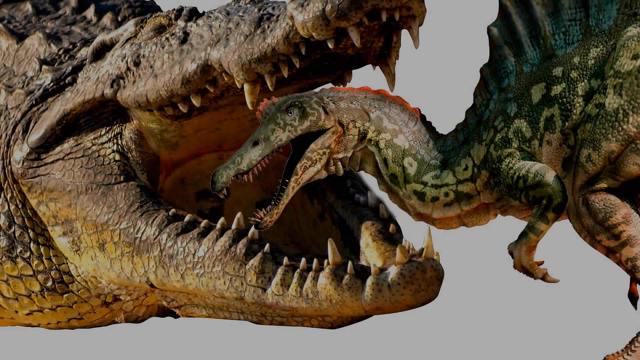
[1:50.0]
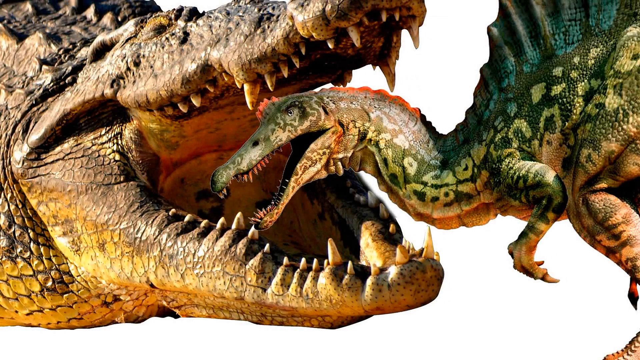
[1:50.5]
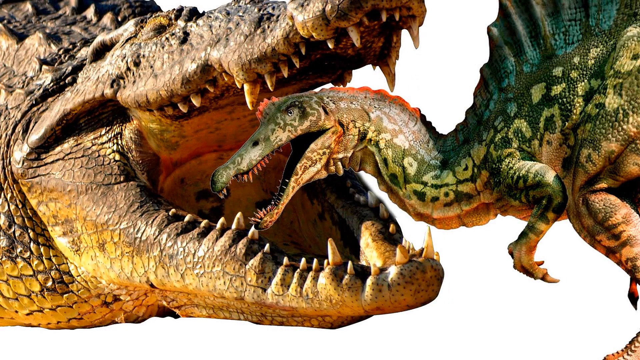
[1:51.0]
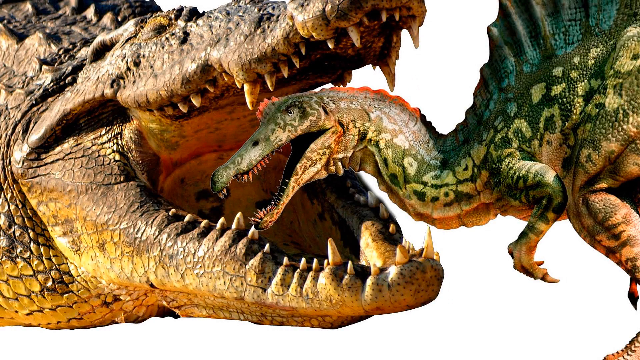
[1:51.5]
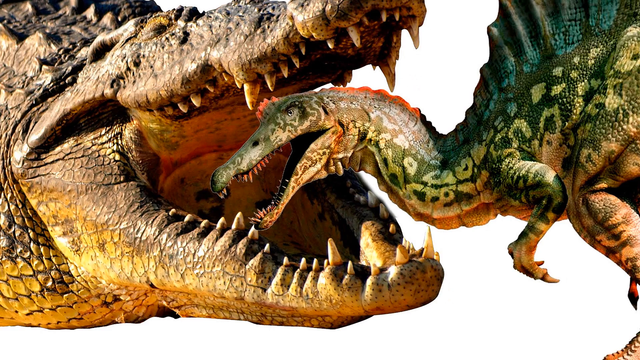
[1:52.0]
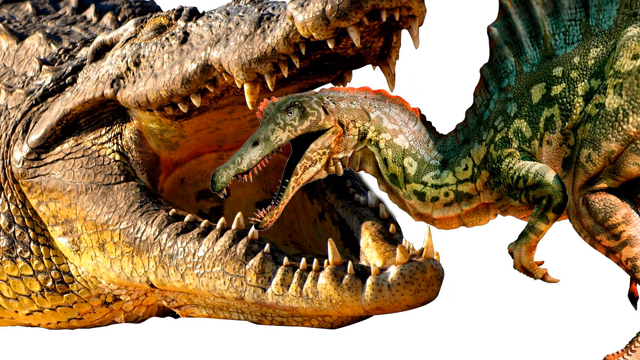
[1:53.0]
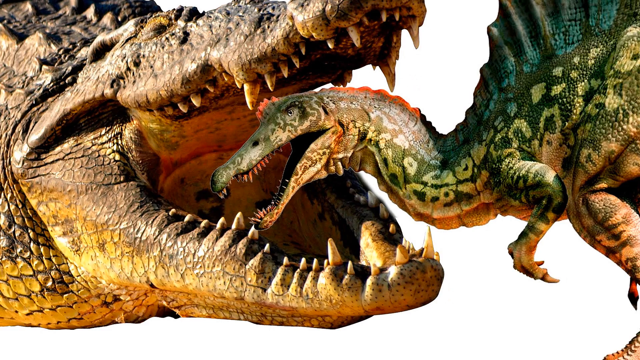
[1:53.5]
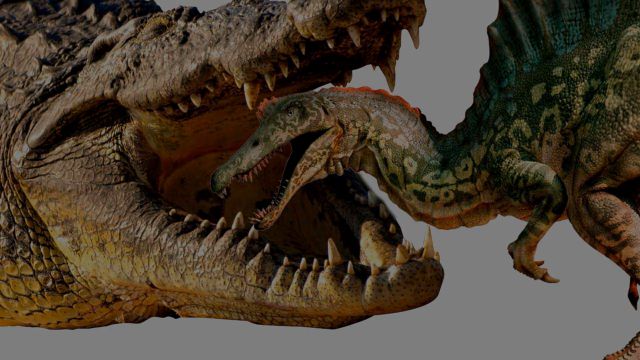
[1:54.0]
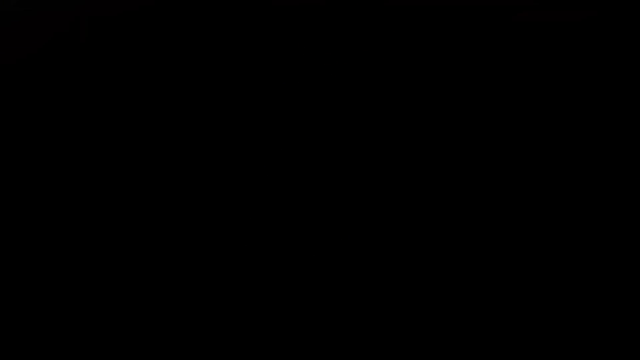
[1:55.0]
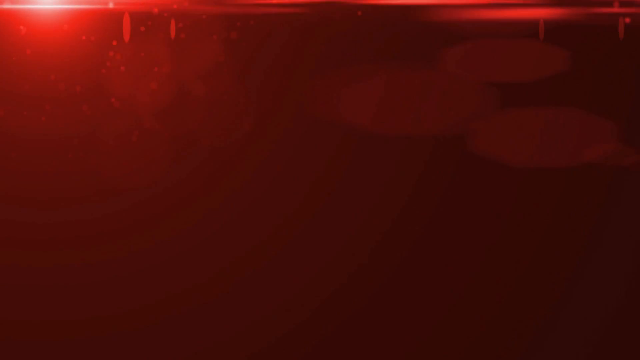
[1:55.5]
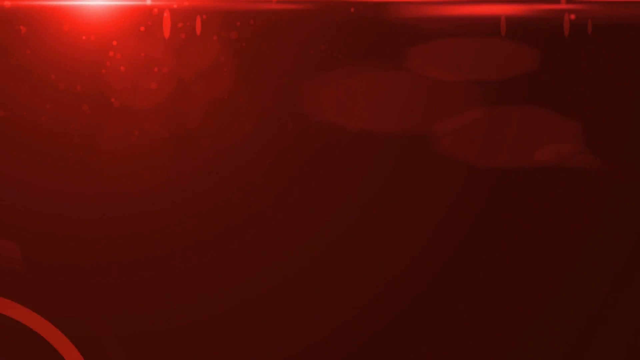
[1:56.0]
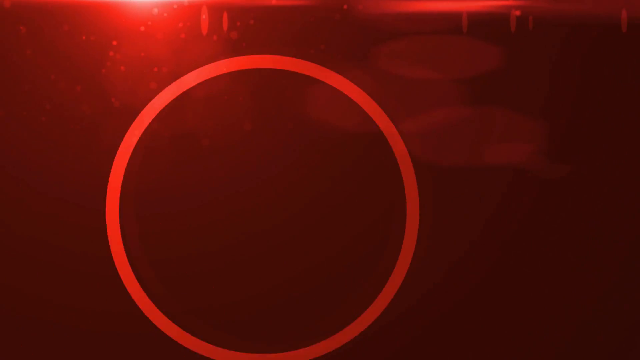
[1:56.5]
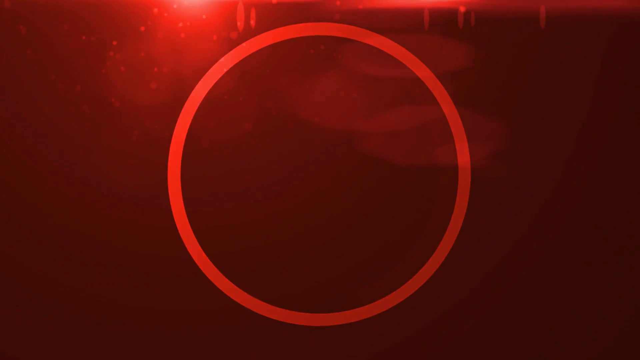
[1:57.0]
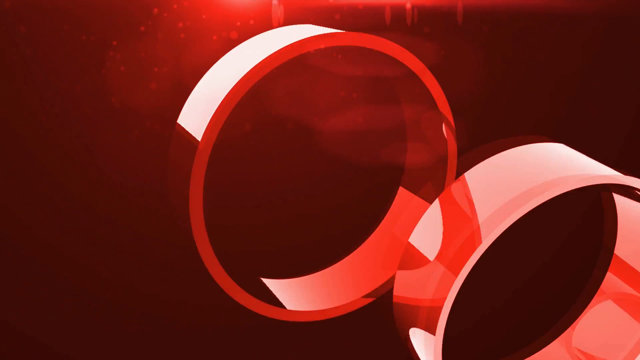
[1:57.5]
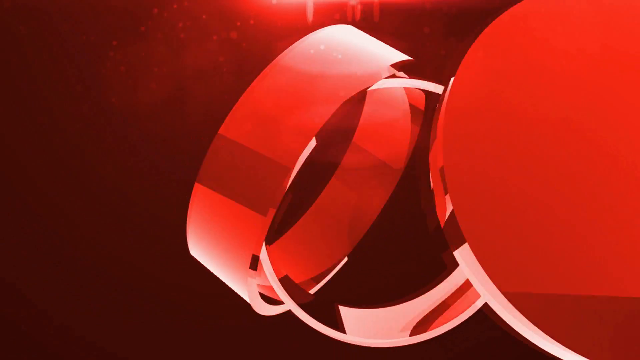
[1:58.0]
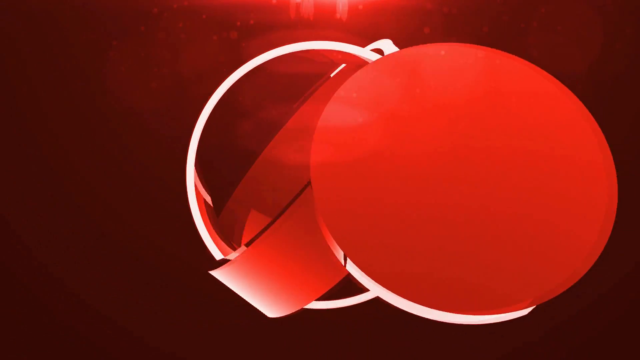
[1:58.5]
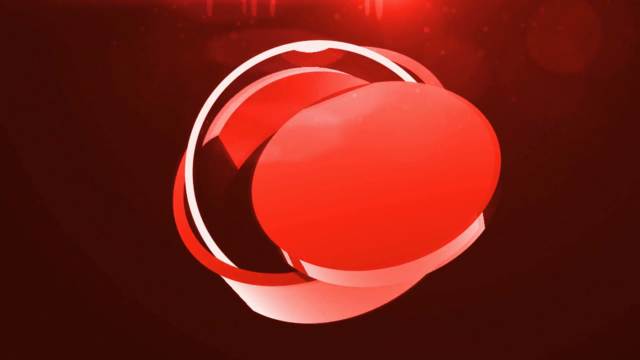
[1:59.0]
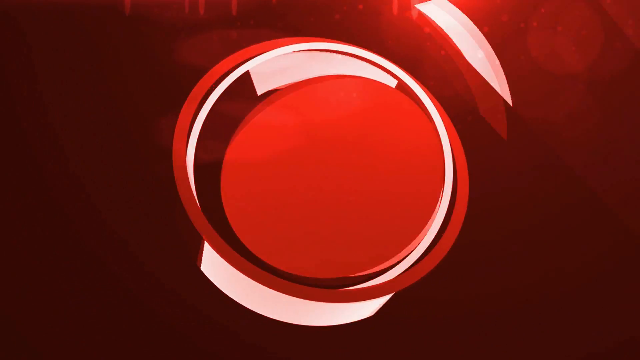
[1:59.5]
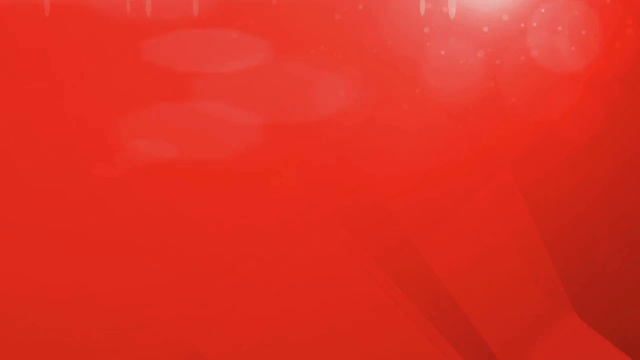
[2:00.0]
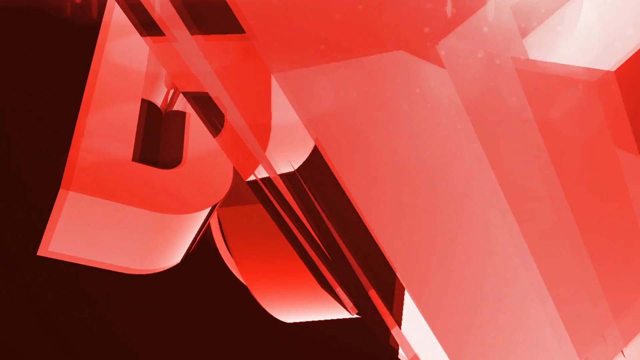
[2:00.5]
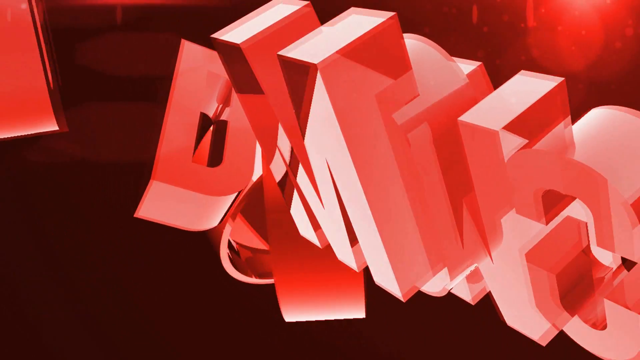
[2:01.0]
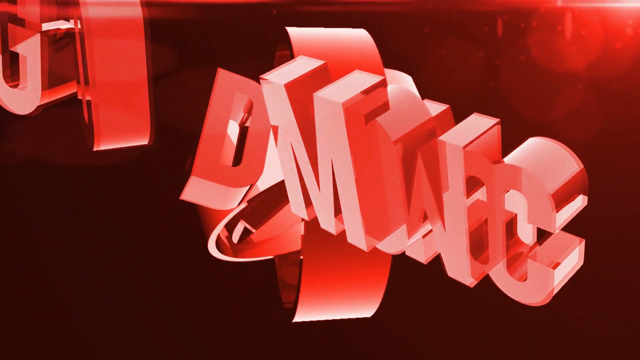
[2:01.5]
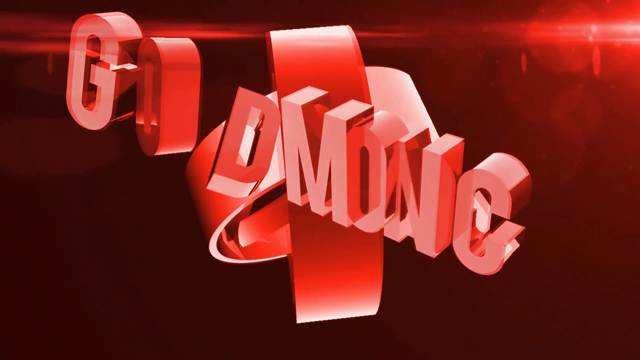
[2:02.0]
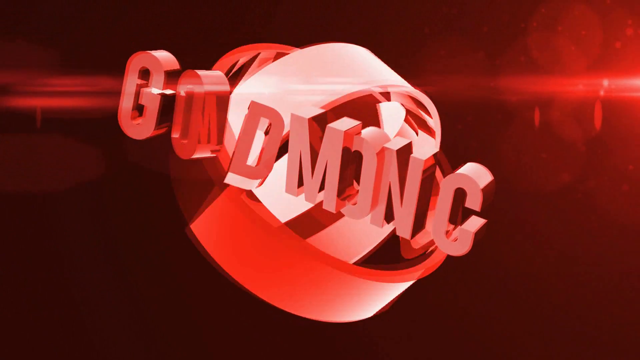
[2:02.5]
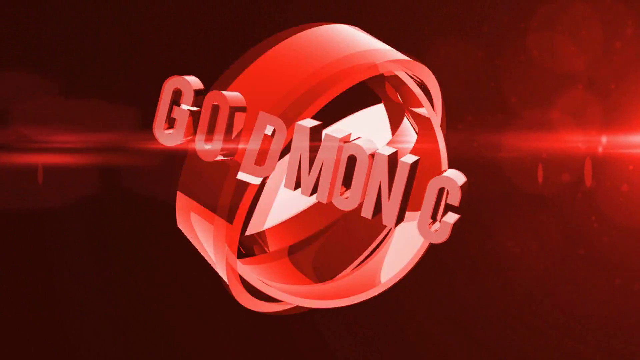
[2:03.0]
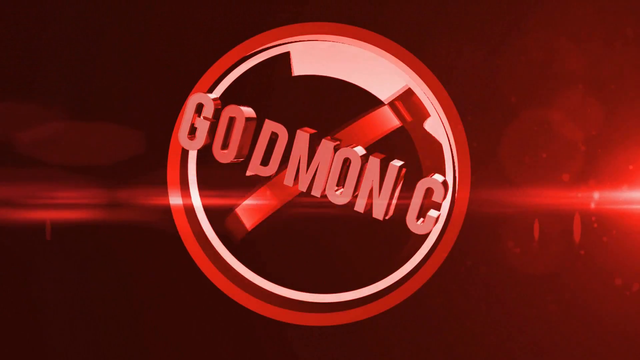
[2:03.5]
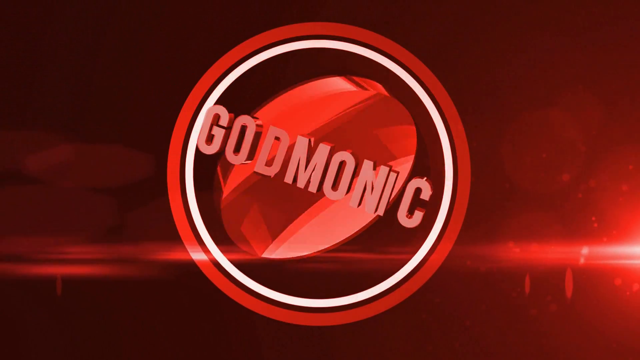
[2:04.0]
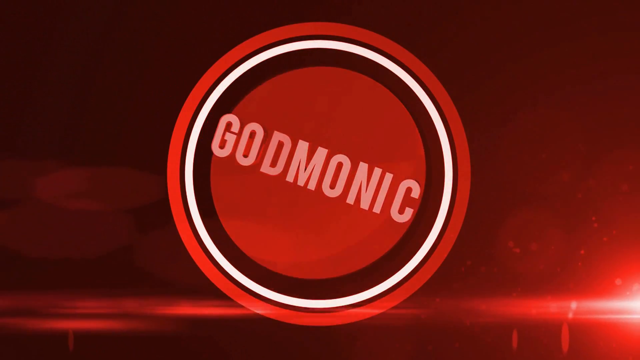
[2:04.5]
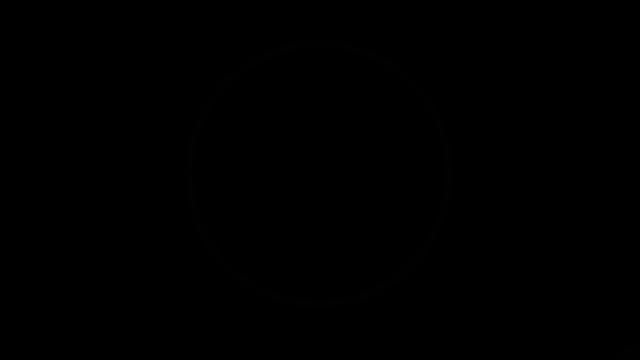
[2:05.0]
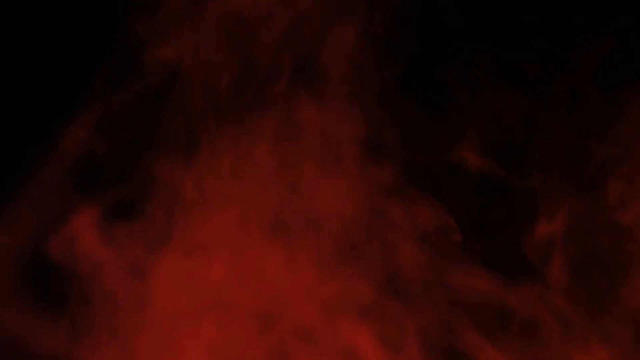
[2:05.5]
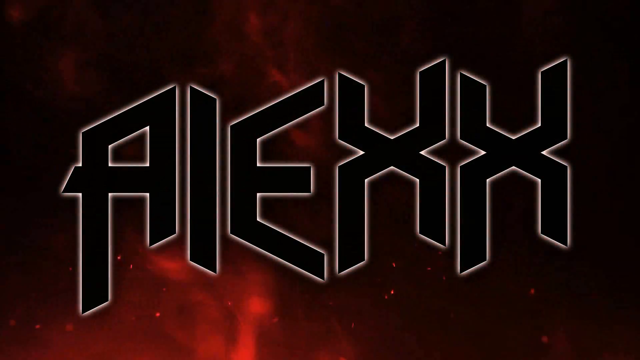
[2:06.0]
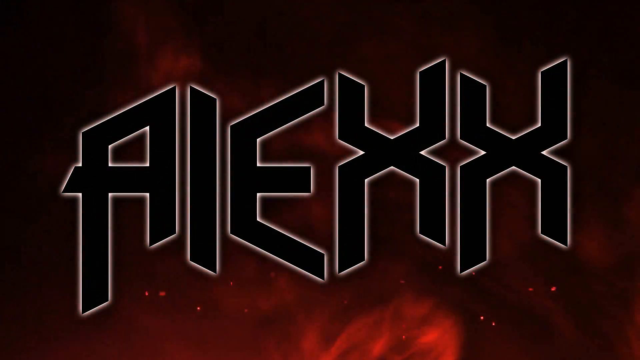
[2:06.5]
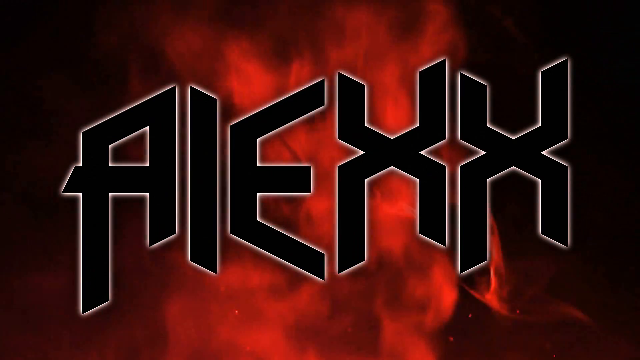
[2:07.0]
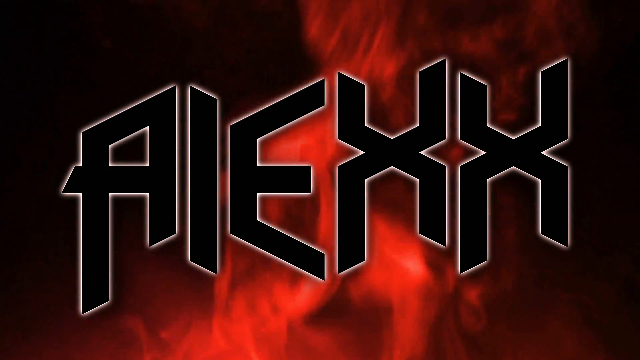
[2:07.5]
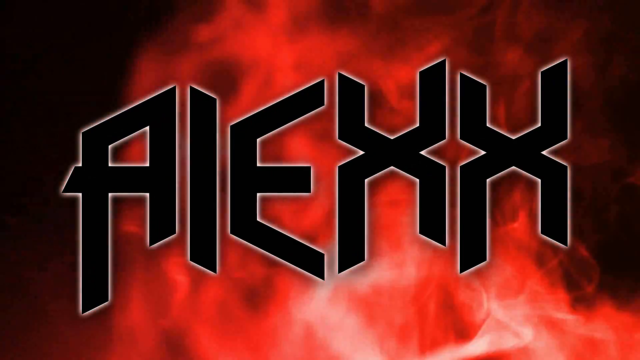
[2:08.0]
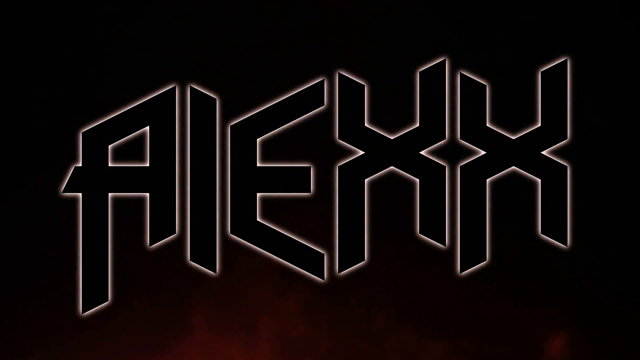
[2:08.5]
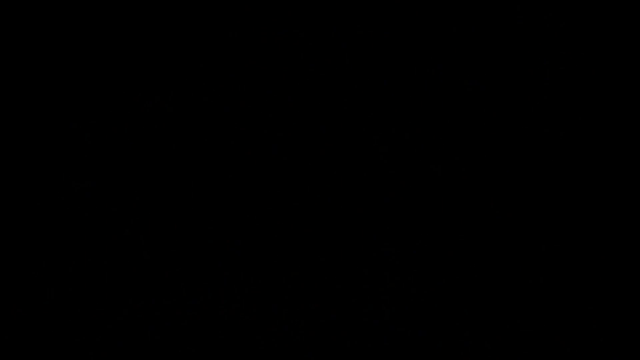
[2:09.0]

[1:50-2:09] The strike continues in video. Then comes a close-up still image of a large animal that looks more like an alligator than a crocodile, with its mouth open. It shows a totally different type of dinosaur with a frilly fan on its back like the fin on the back of a fish; this dinosaur walks on two legs with two small front arms like a T. rex and looks more like a bird. Its head is about to be chomped by the alligator. The still image goes away and the background becomes deep red with bright red circles, CGI that appears to be made of something metallic and reflective, forming three circles within circles, with the word "Godmonic" appearing within them. The background then becomes more black with red fire behind, and in front are five block capital letters outlined in white, "AIEXX", with the flame behind them.